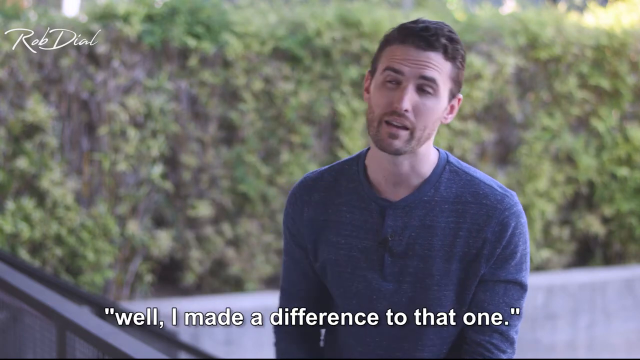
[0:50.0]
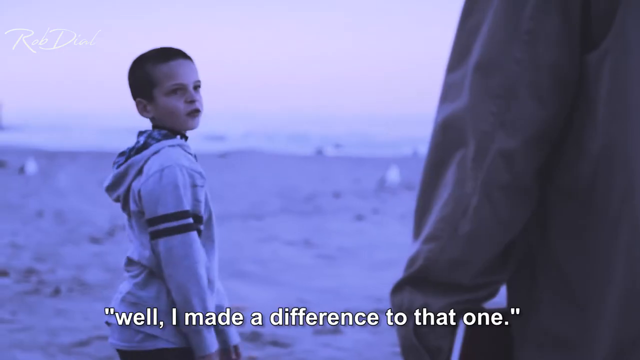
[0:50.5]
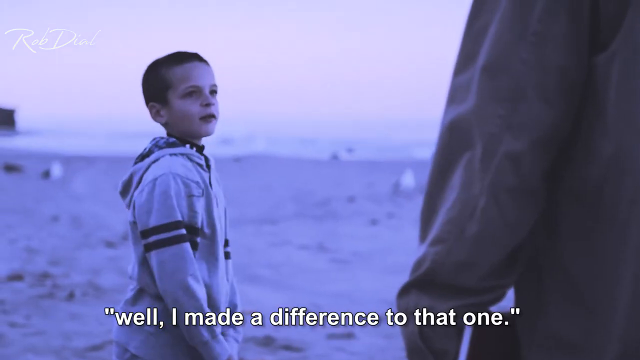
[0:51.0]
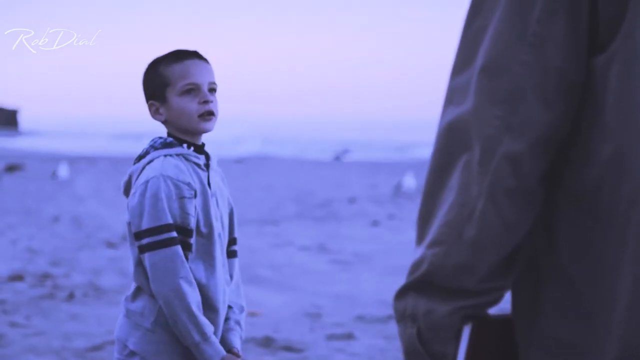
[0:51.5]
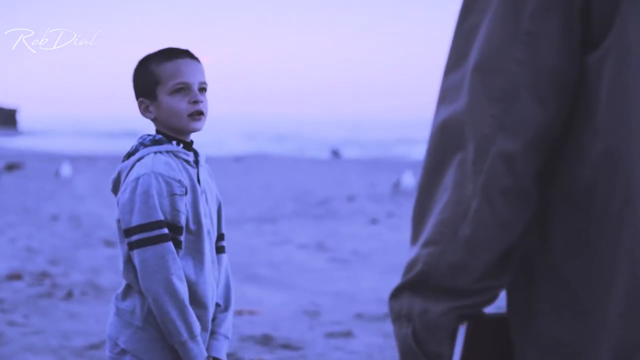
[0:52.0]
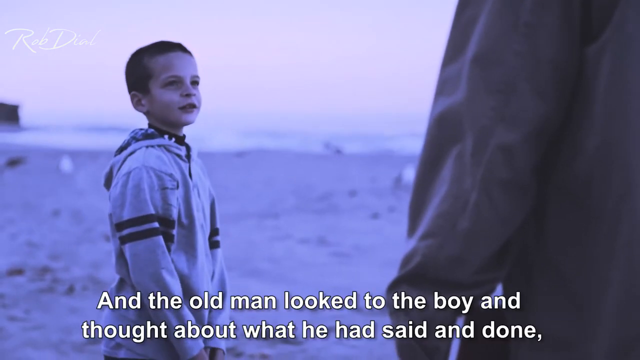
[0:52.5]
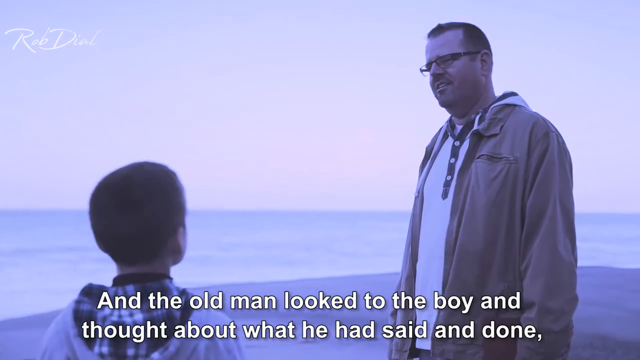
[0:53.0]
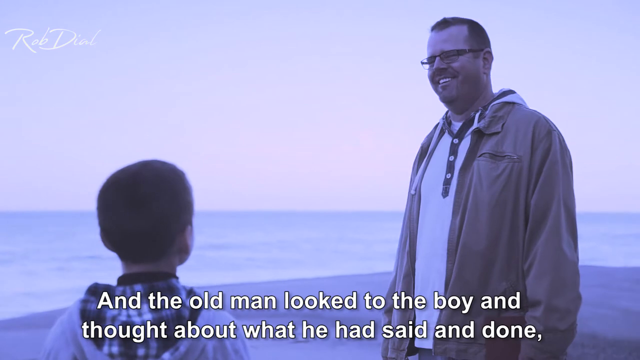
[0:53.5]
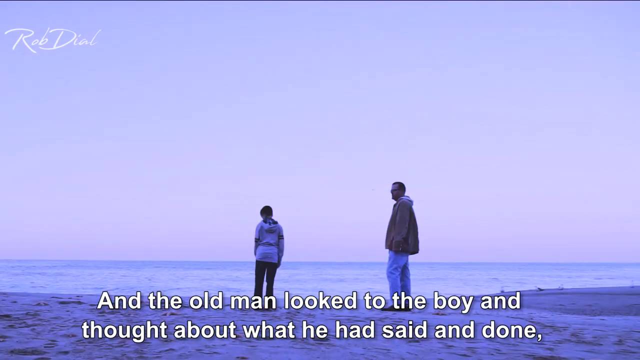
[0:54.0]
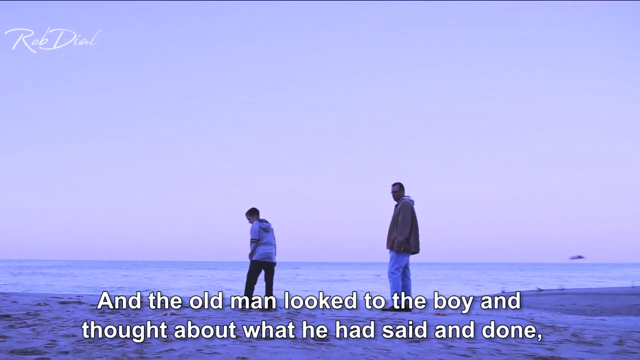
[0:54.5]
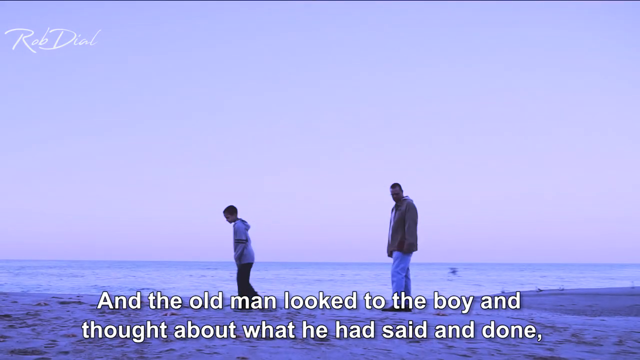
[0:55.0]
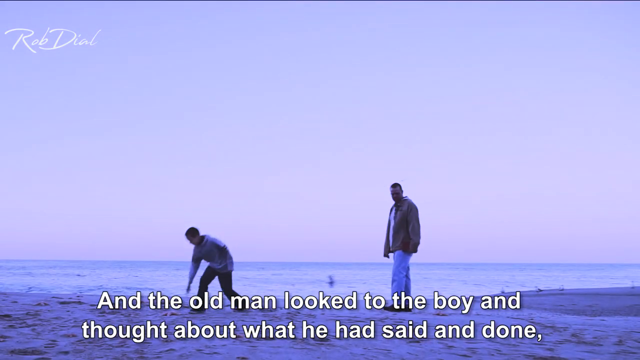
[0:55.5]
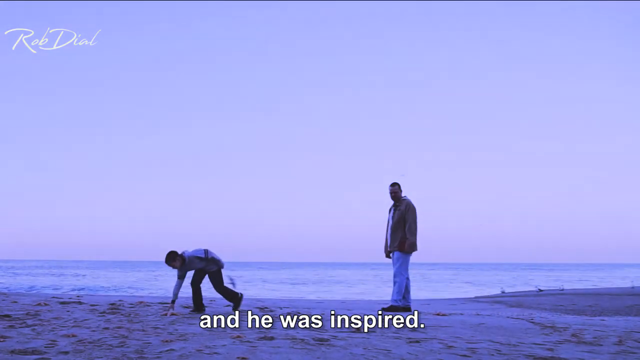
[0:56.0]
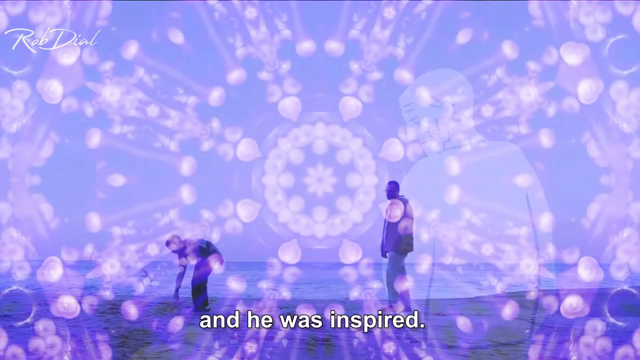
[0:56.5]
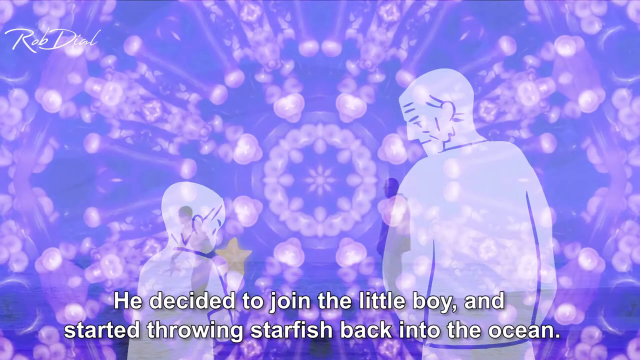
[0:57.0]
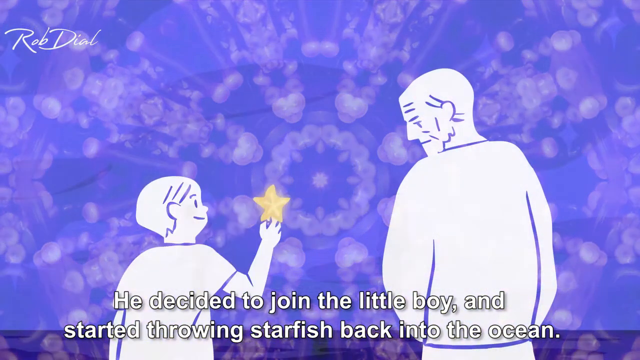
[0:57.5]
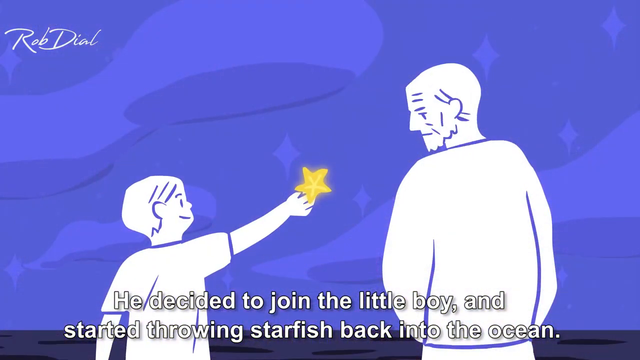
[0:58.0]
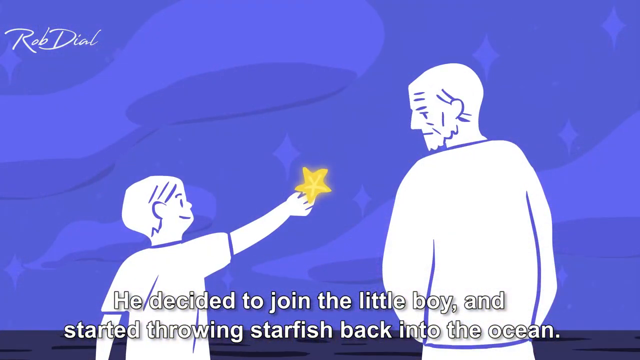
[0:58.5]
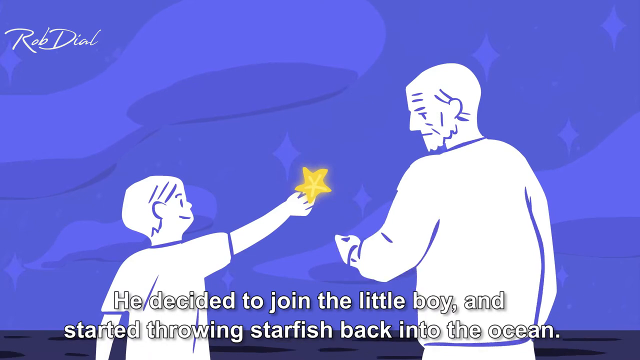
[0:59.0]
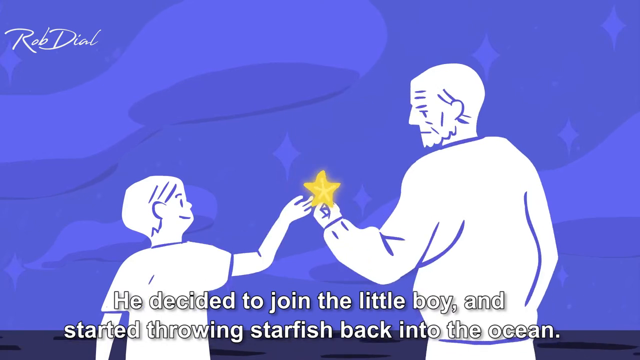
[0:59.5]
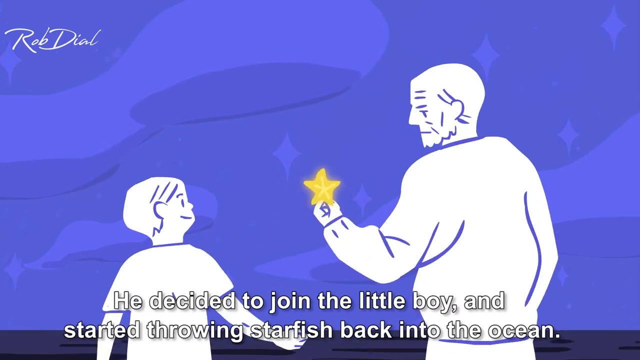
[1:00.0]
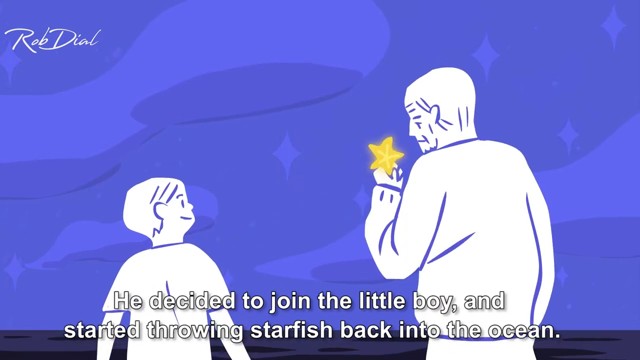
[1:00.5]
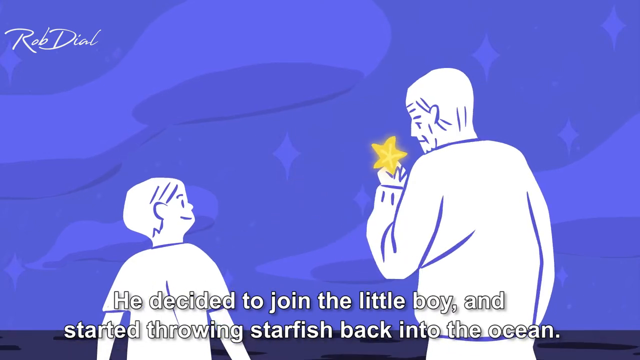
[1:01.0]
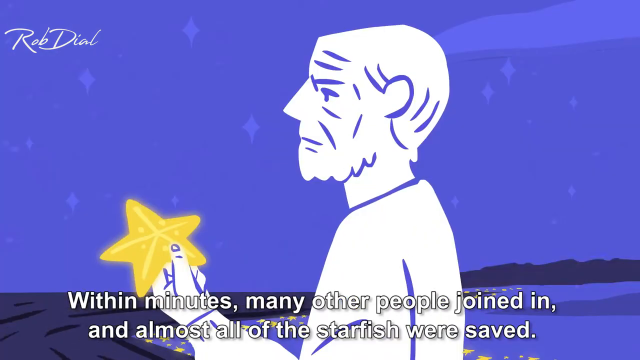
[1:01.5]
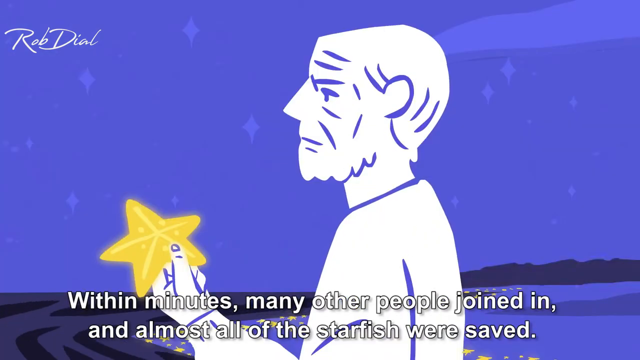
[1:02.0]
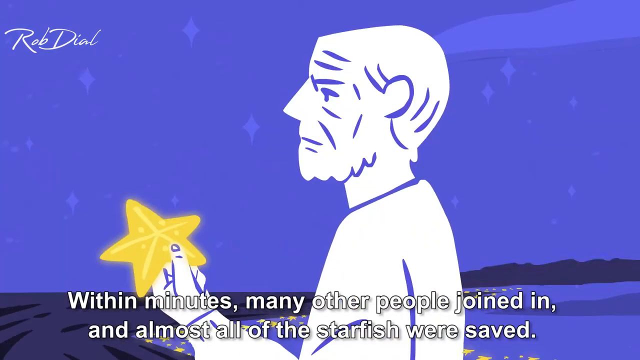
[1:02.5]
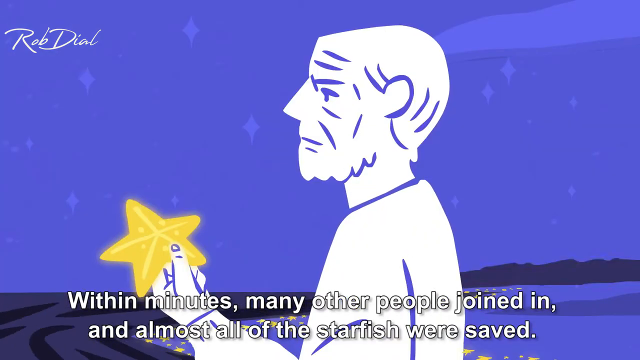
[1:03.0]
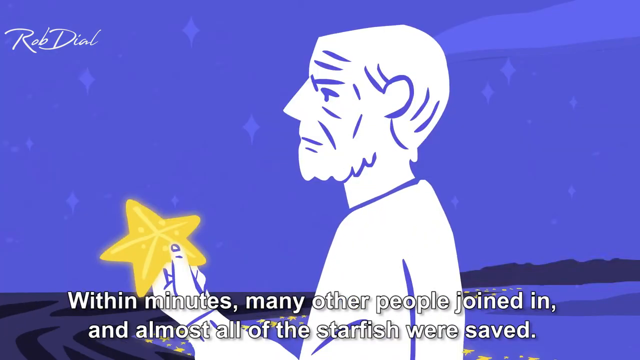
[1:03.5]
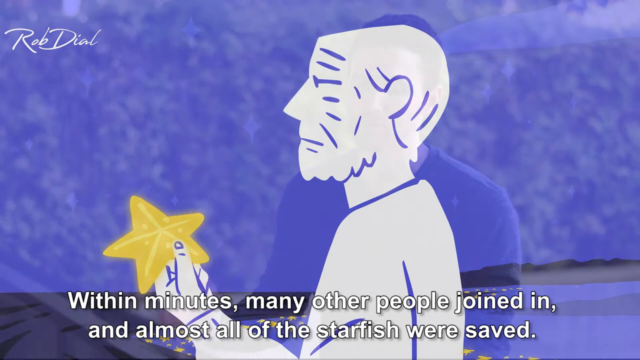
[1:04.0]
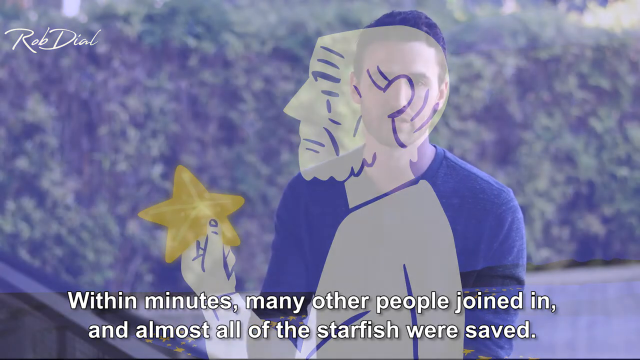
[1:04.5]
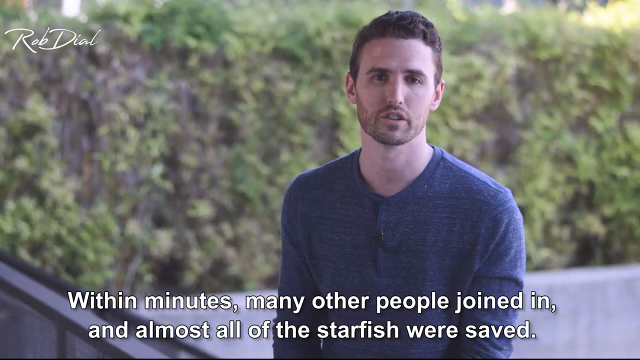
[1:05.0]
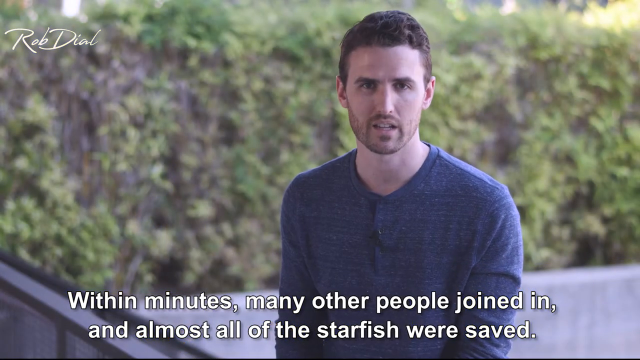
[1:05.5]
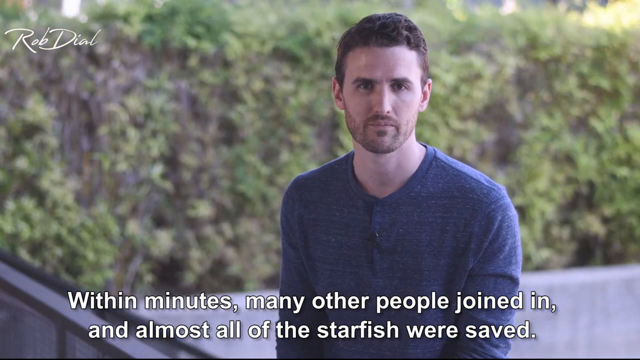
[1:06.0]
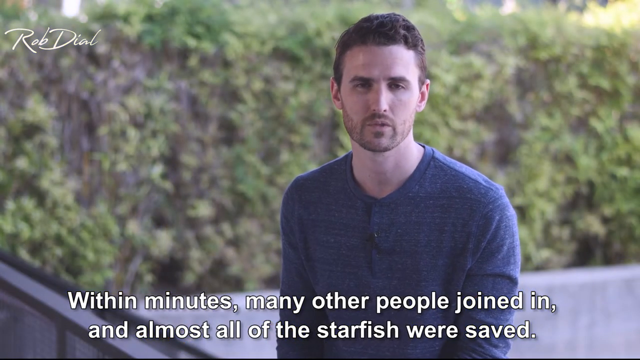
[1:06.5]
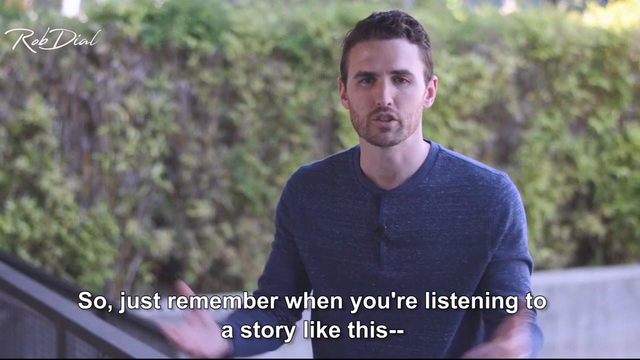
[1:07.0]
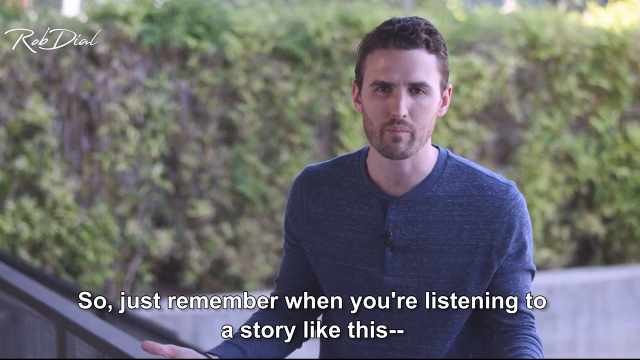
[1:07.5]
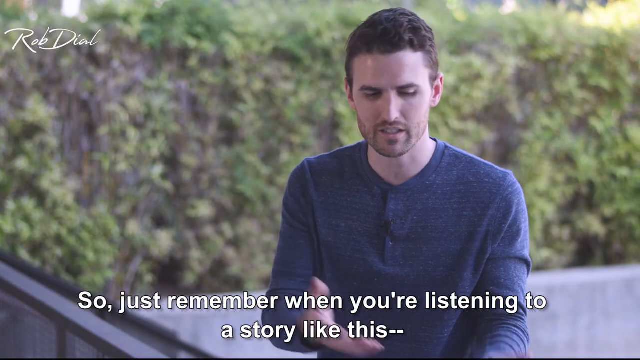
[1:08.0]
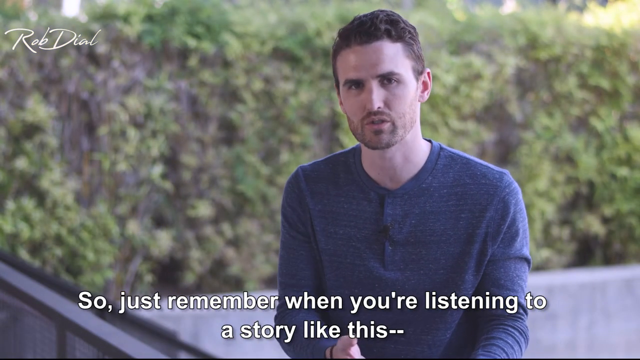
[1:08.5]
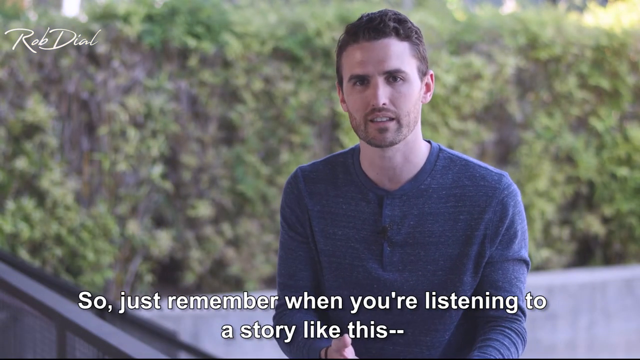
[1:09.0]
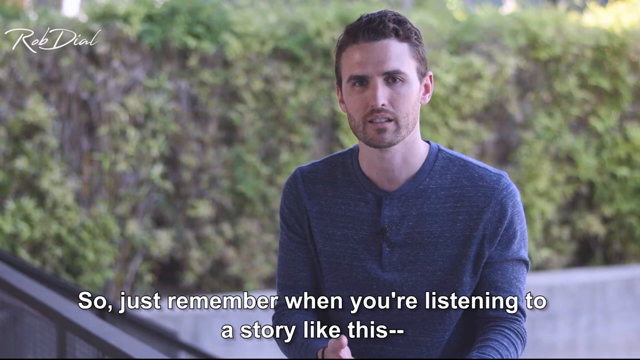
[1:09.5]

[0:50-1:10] The caption at the bottom of the screen reads "and he looked back up at the man and replied. 'Well, I made a difference to that one'", and the little boy says these words as he faces the old man. The caption continues, "and the old man looked to the boy and thought about what he had said and done". The old man smiles at the little boy. The little boy then bends down and picks up another starfish as the caption reads "and he was inspired". The animated versions of the little boy and the old man return to the screen, with the little boy handing a starfish to the old man. The caption reads "he decided to join the little boy and started throwing starfish back into the ocean. Within minutes, many other people joined in and almost all of the starfish were saved". The video cuts back to the narrator in the blue shirt, and the caption at the bottom of the screen reads "so just remember when you're listening to a story like this".